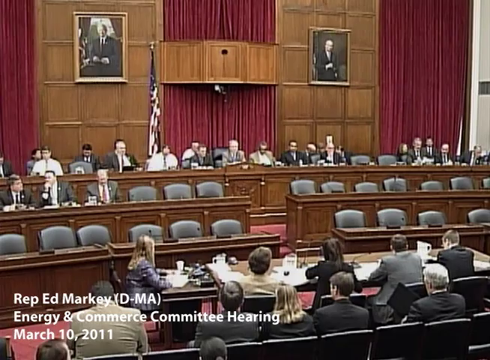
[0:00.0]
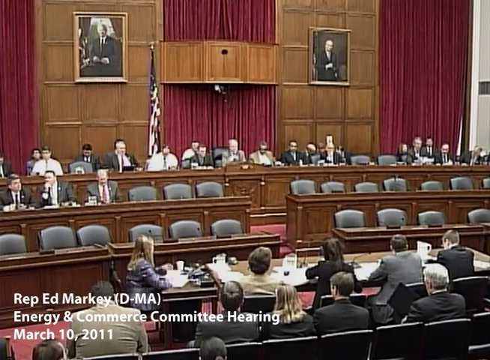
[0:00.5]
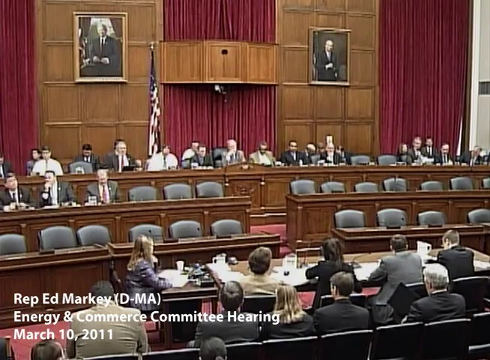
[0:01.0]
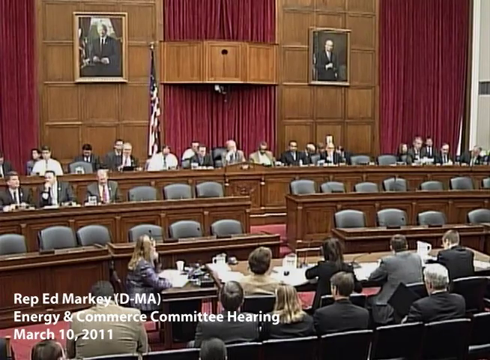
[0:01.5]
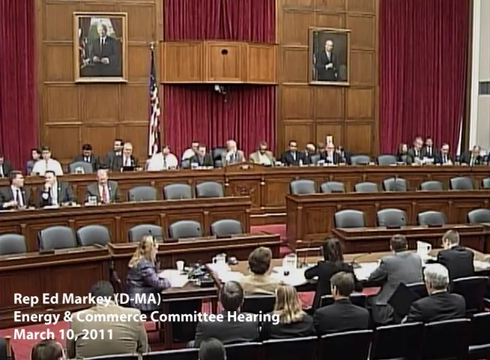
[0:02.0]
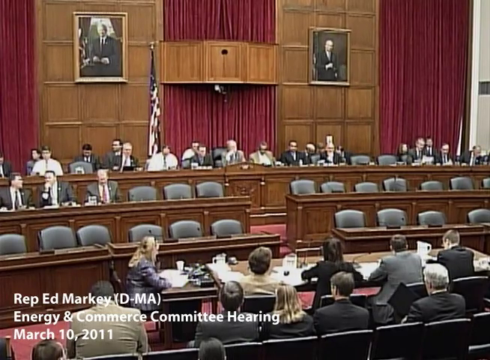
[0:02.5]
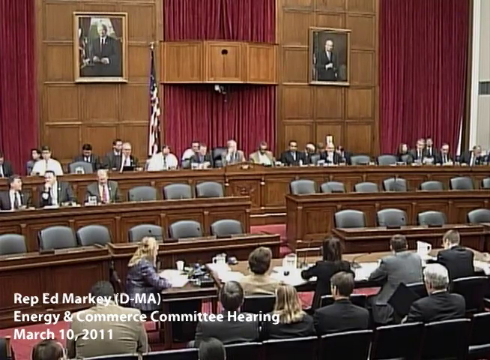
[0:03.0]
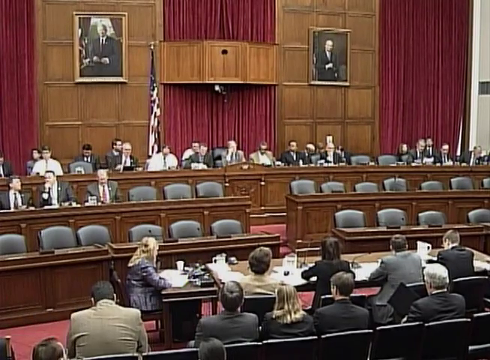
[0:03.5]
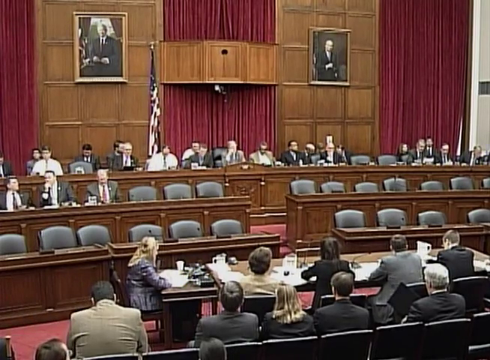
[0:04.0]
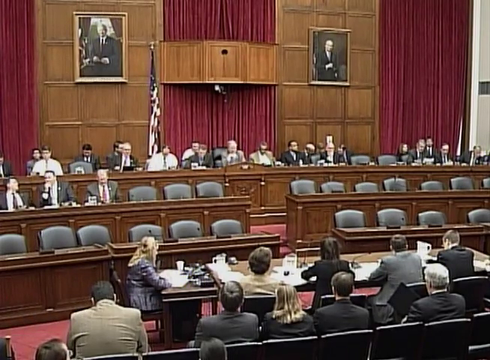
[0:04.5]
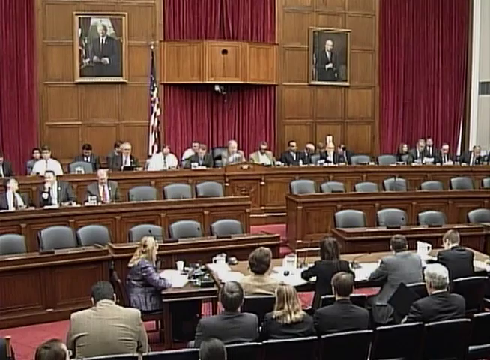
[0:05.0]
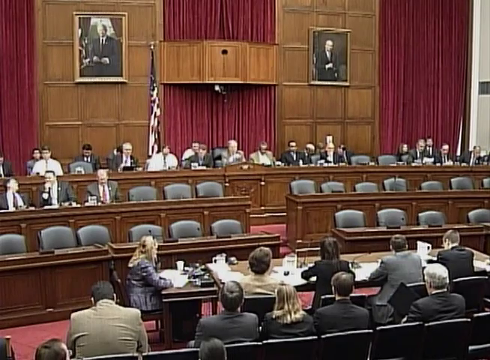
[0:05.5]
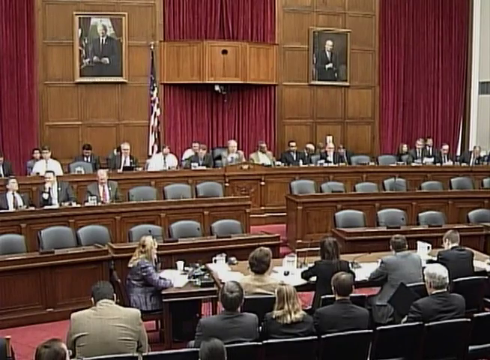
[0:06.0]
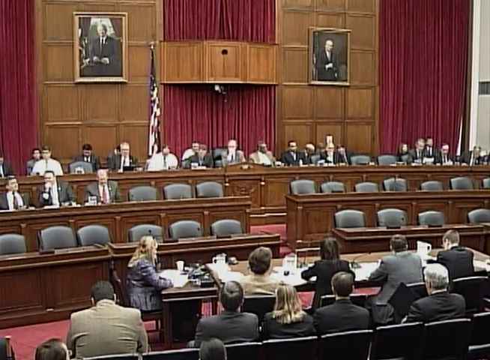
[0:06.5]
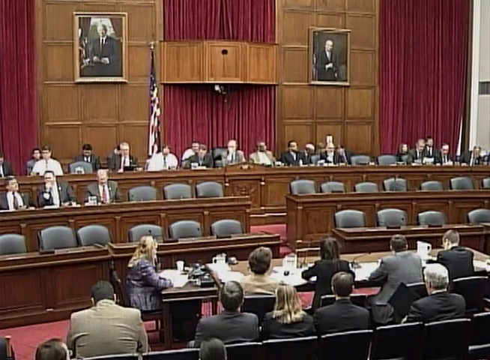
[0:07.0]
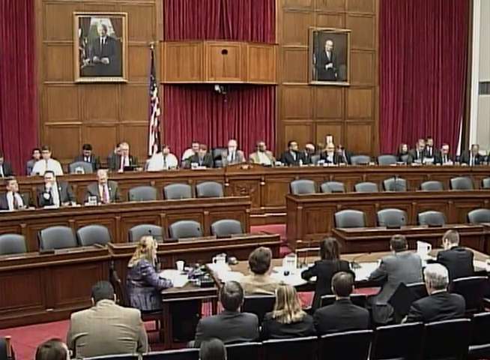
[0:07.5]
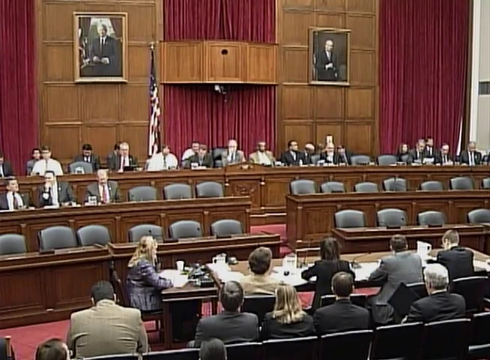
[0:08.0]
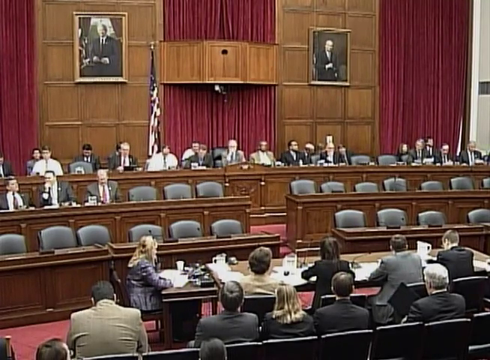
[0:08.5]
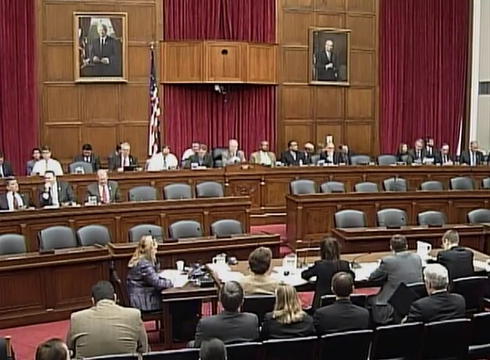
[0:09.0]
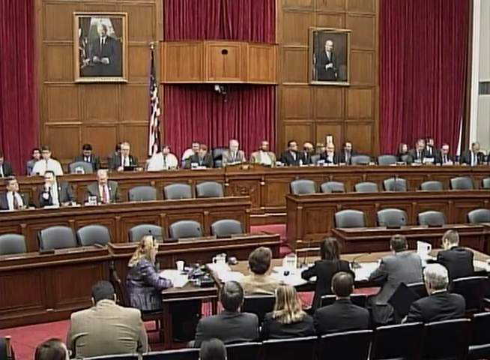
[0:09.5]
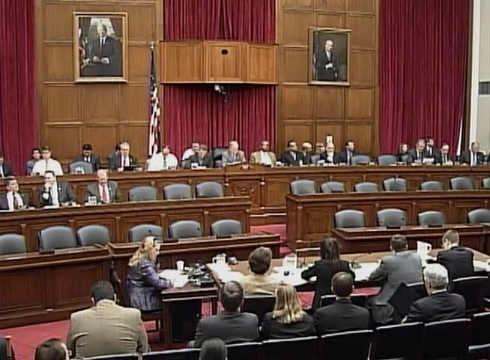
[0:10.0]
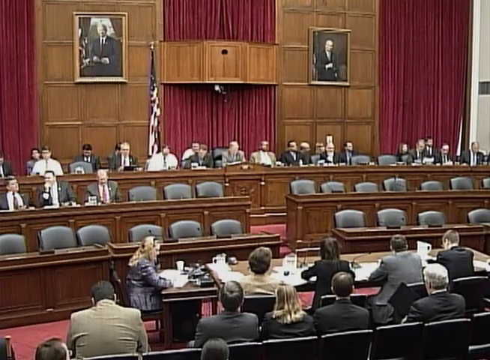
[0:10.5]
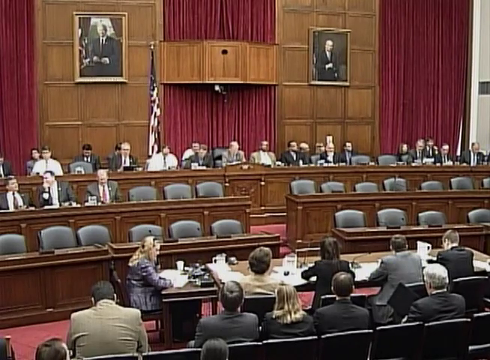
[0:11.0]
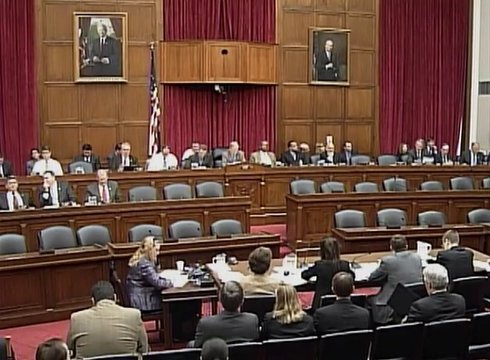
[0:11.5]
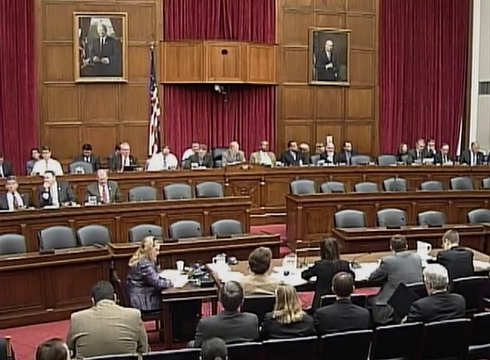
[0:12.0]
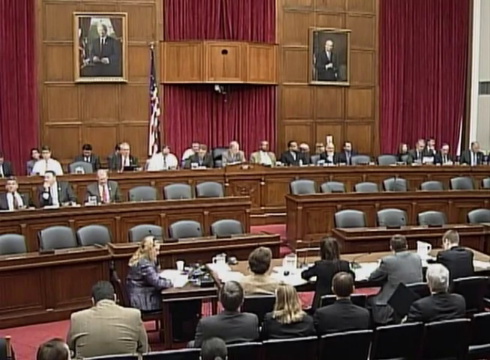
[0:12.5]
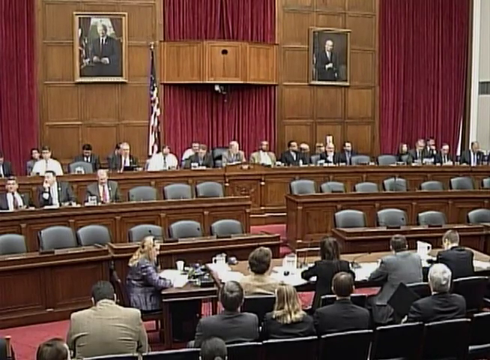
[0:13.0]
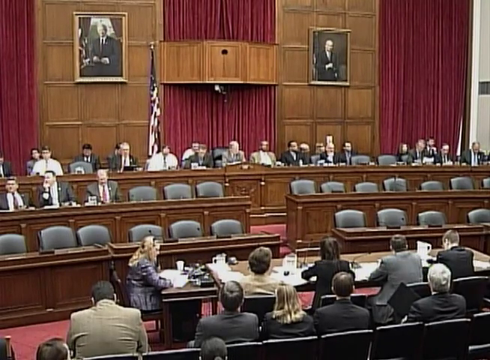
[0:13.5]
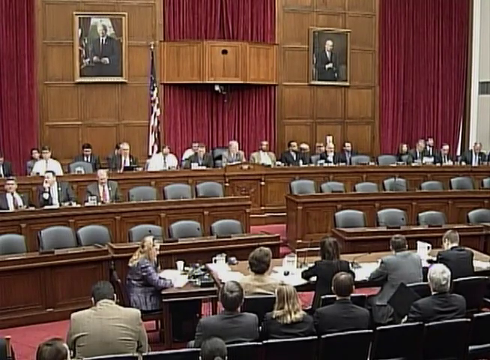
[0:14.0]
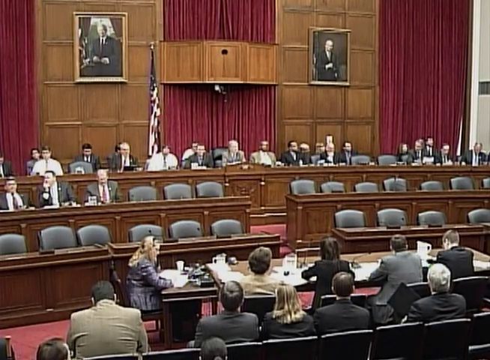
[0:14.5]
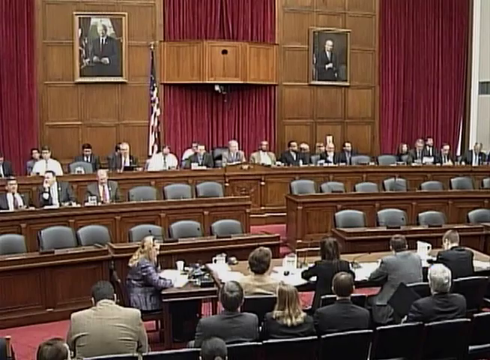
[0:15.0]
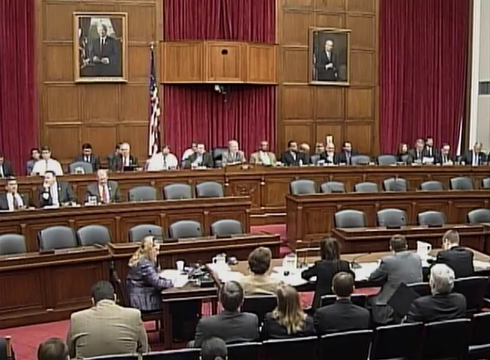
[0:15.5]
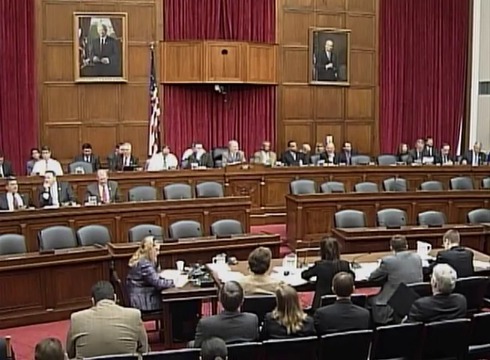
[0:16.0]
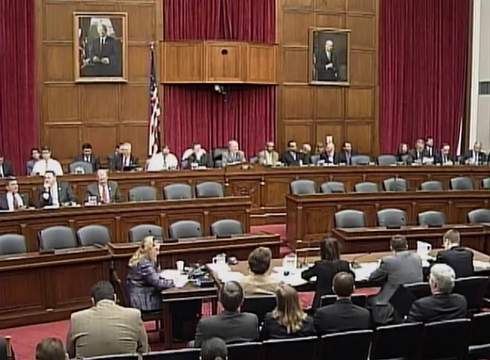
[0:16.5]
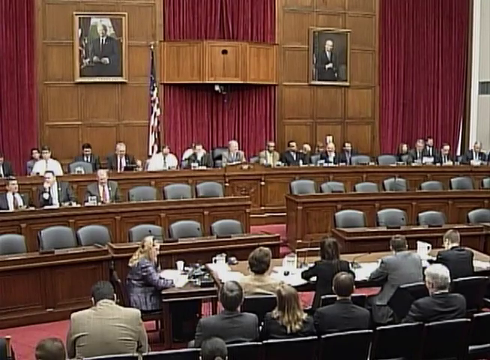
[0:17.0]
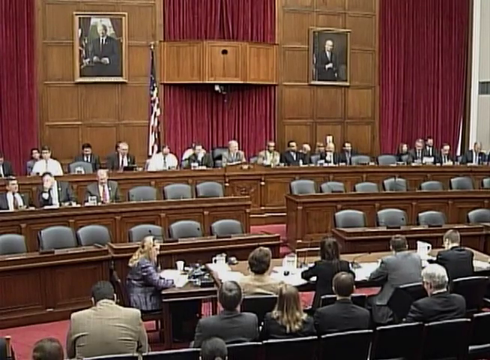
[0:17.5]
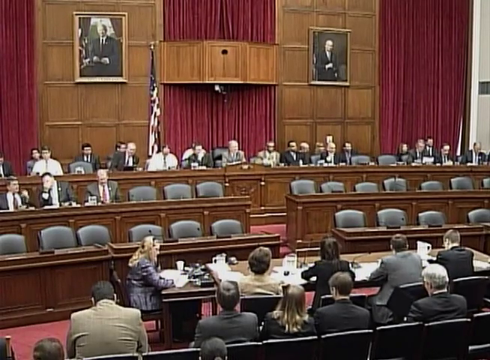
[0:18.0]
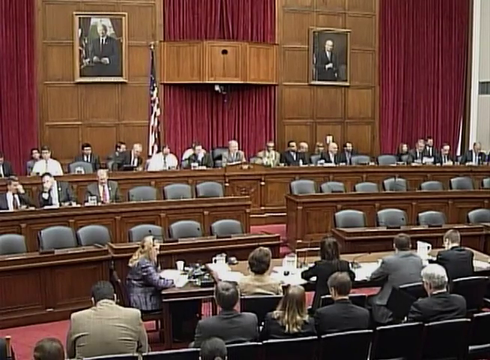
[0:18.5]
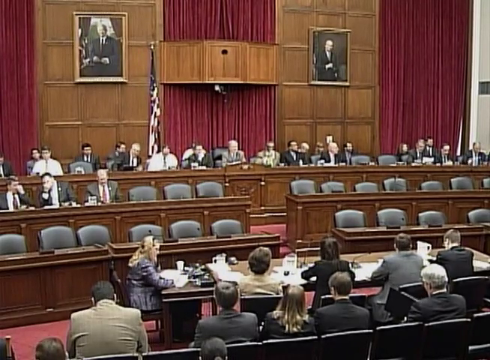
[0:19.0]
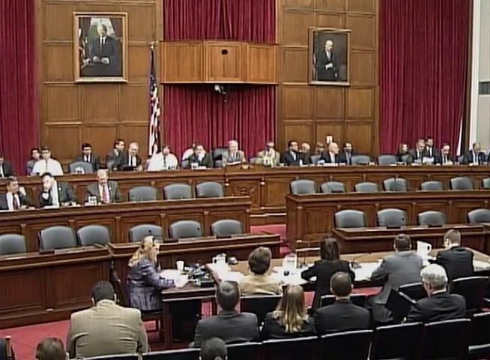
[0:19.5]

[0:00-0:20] The video opens on what looks to be a congressional room with multiple levels of seating. A number of people are seated, all in formal wear. At the very top of the image are two pictures of two white gentlemen. Large curtains hang over what may be windows; they are very large, running from the top of the image down to the bottom of what may be a window. Between the sets of curtains on the wall are panels.